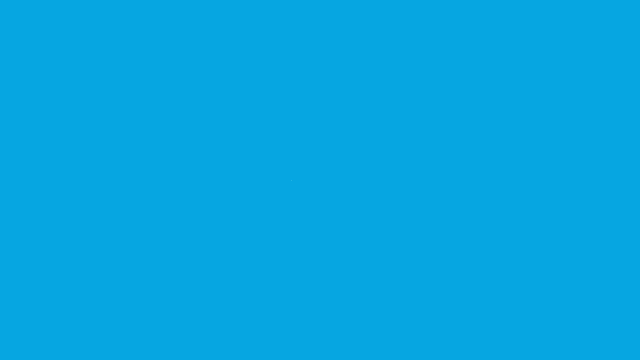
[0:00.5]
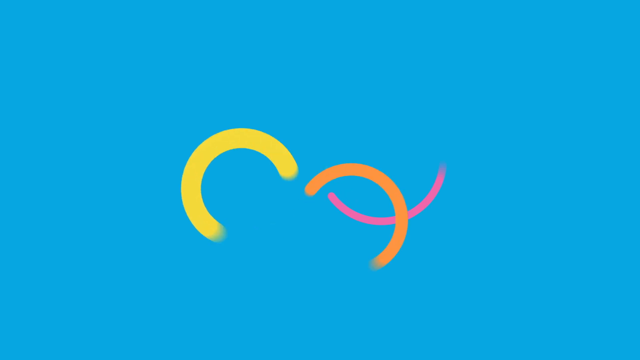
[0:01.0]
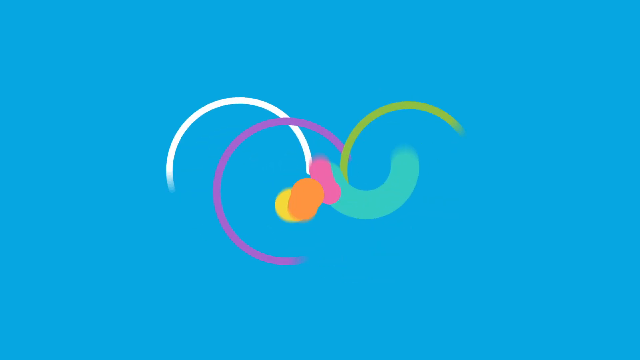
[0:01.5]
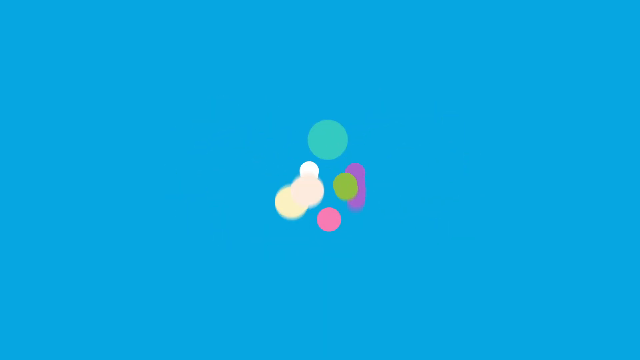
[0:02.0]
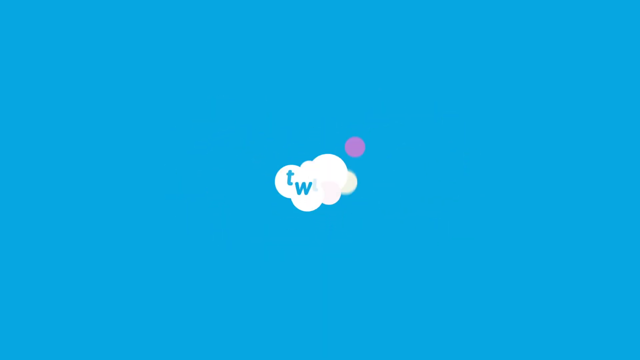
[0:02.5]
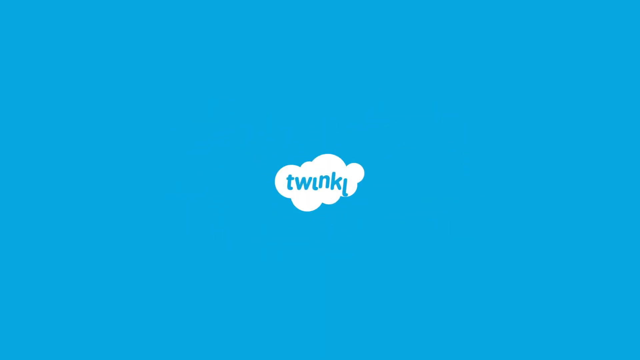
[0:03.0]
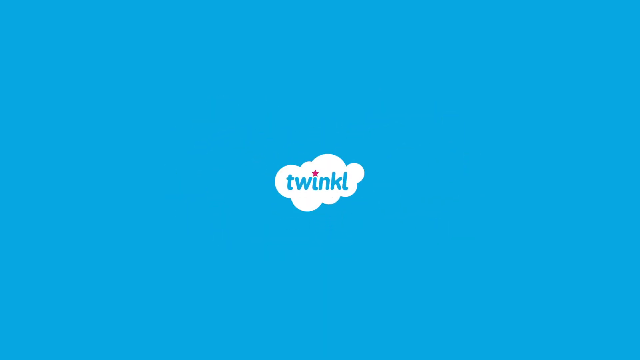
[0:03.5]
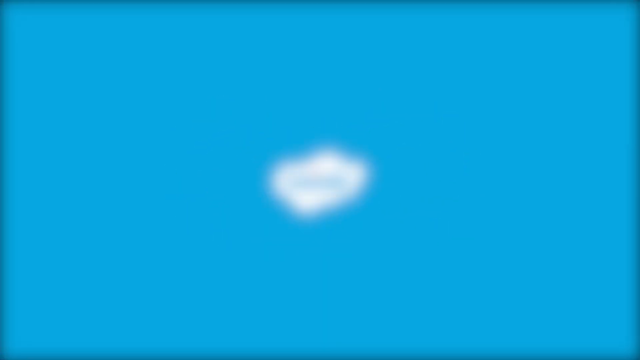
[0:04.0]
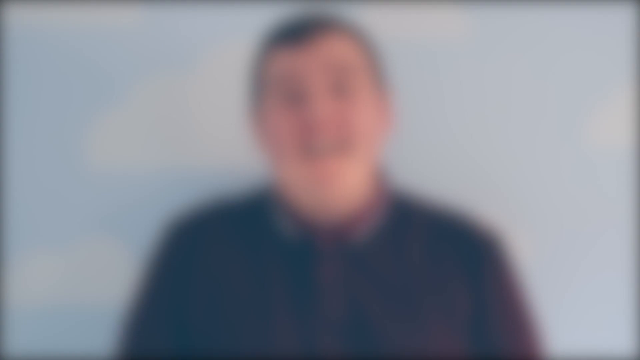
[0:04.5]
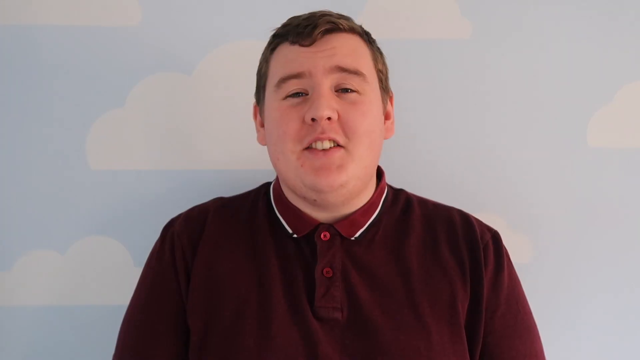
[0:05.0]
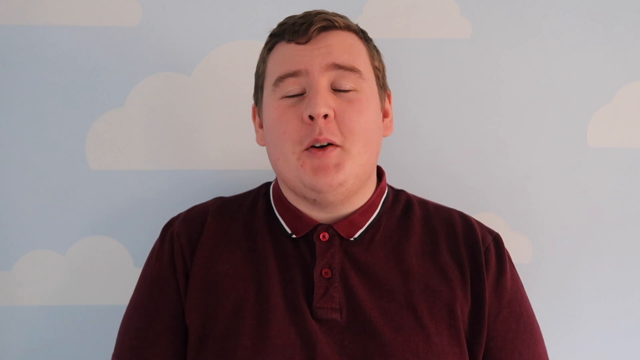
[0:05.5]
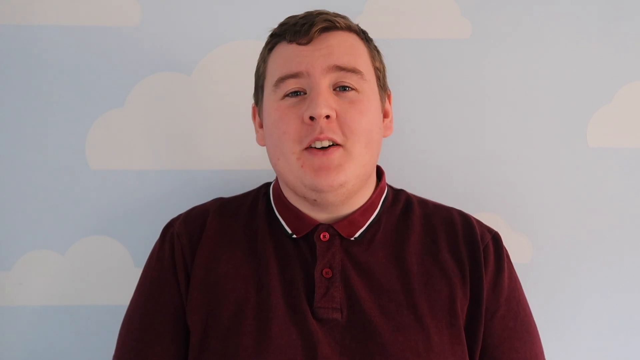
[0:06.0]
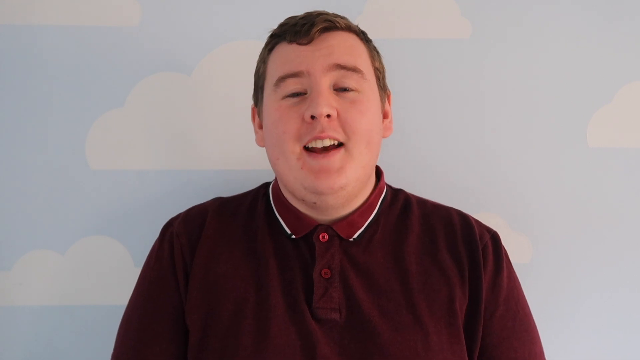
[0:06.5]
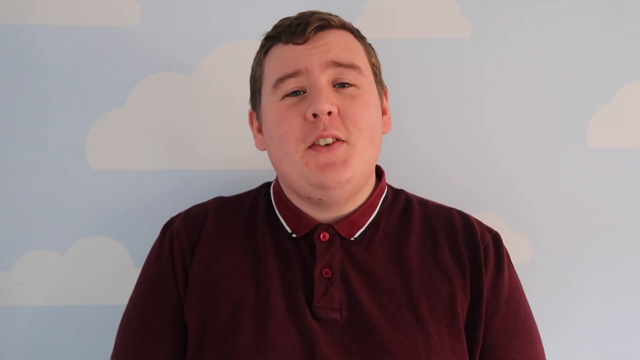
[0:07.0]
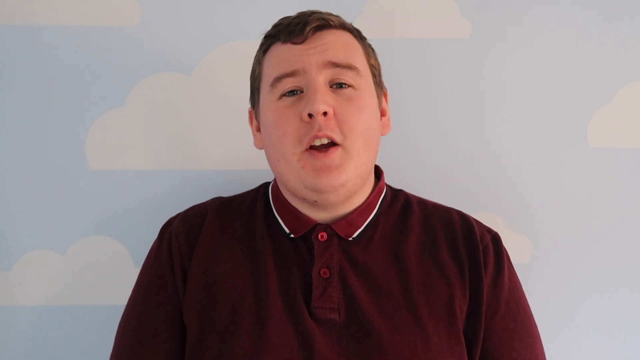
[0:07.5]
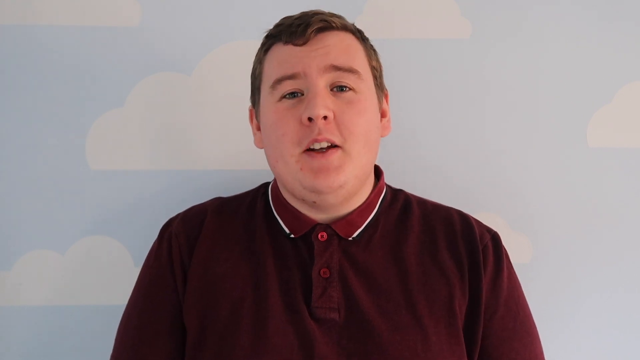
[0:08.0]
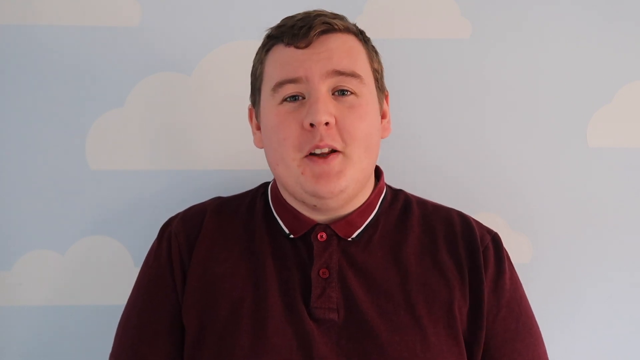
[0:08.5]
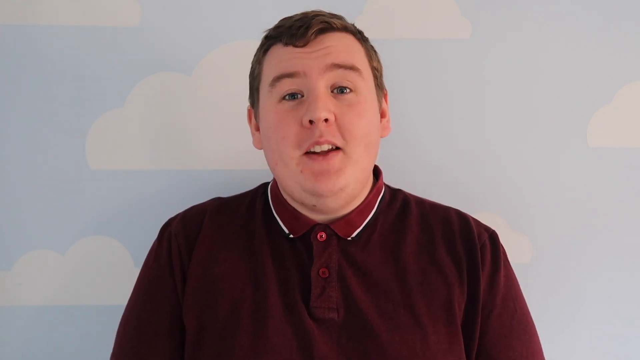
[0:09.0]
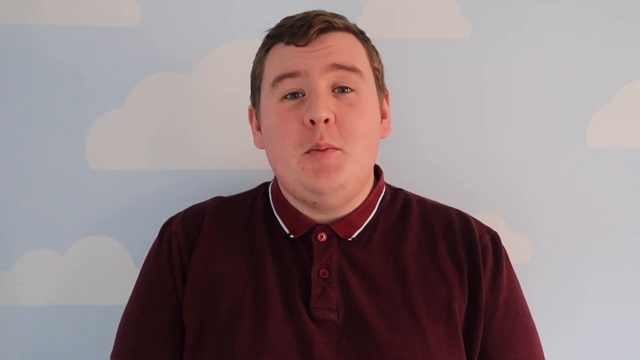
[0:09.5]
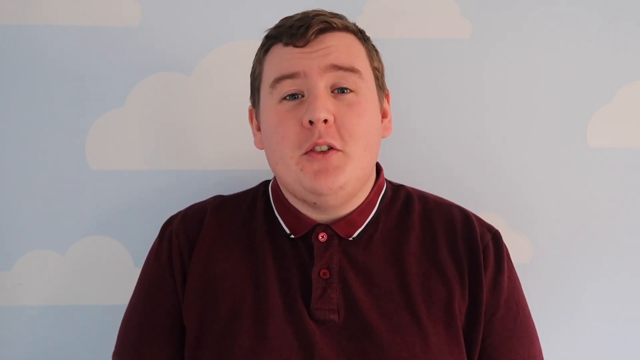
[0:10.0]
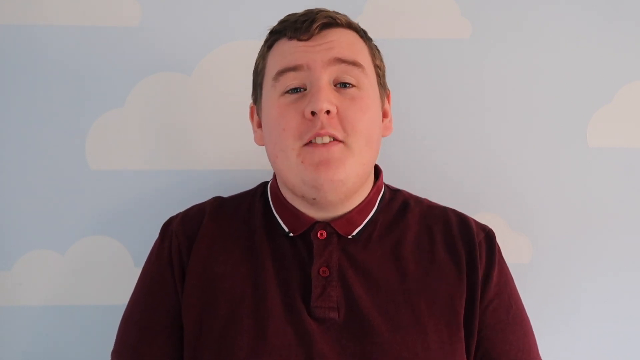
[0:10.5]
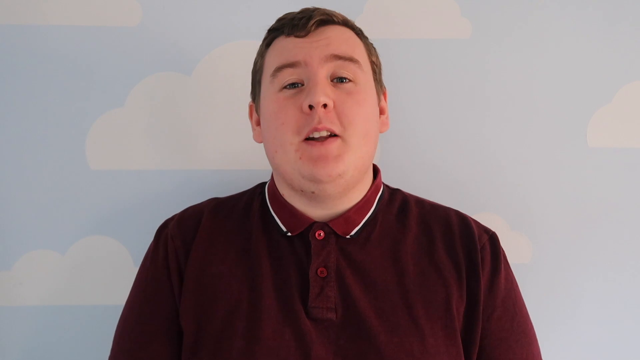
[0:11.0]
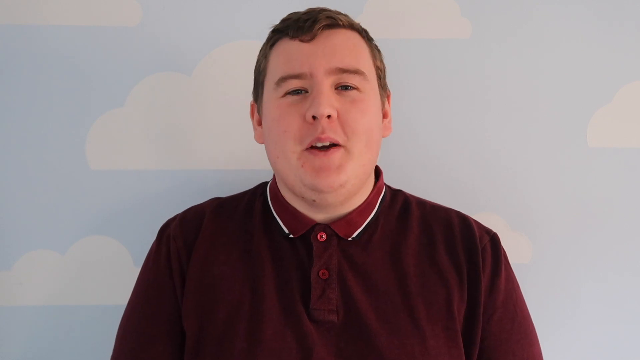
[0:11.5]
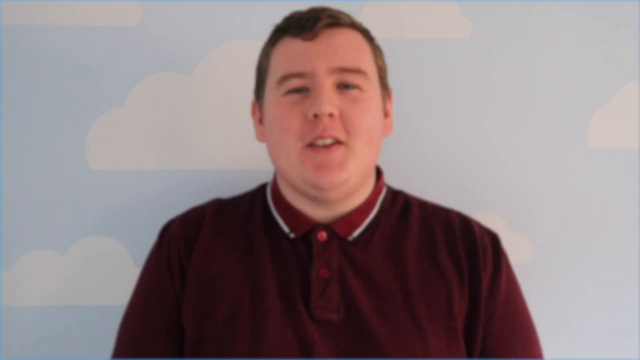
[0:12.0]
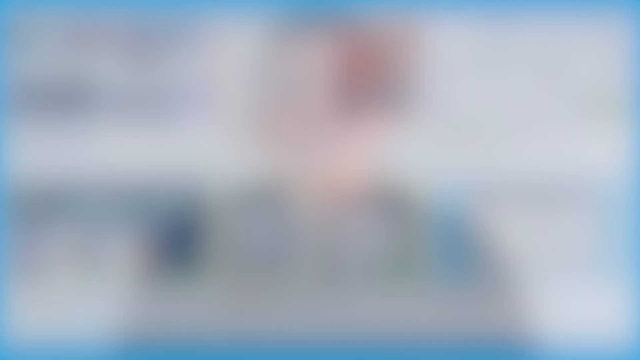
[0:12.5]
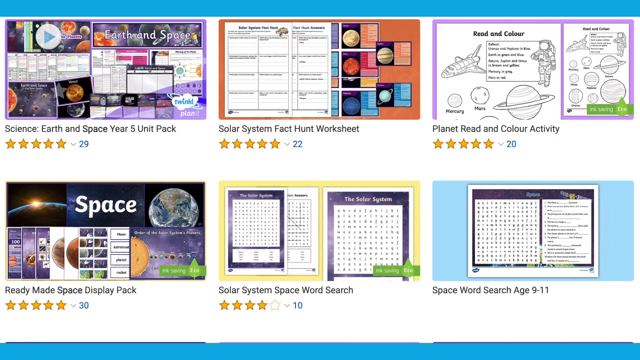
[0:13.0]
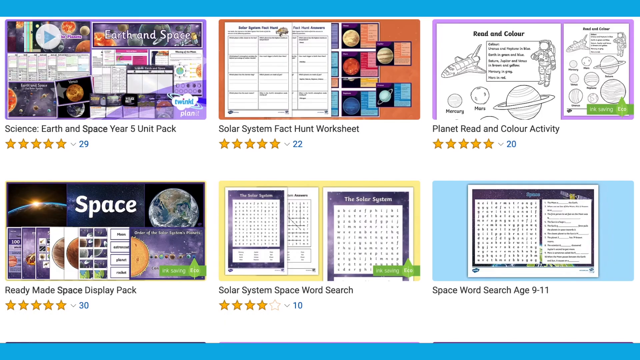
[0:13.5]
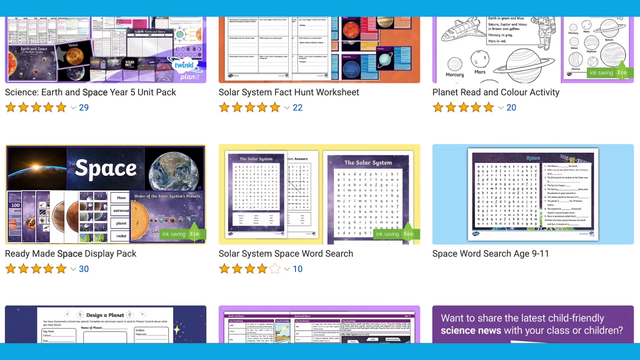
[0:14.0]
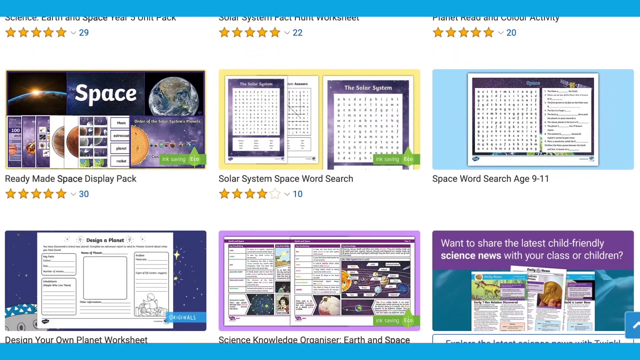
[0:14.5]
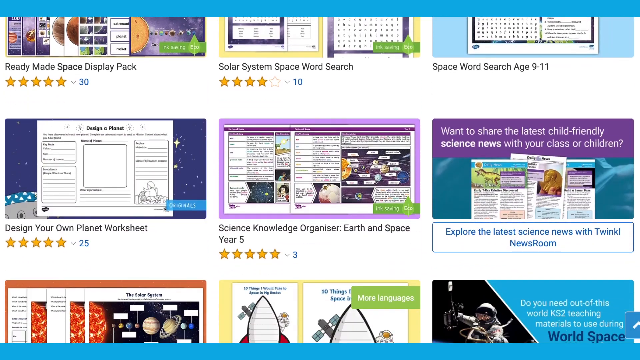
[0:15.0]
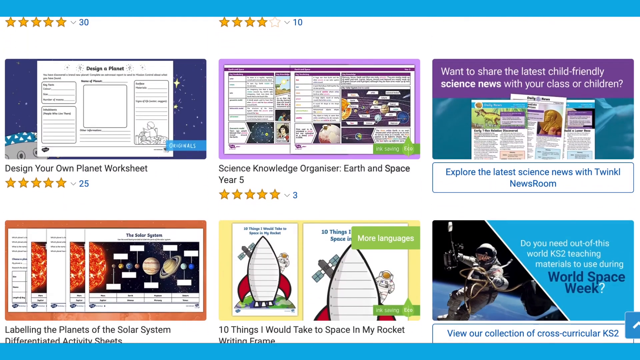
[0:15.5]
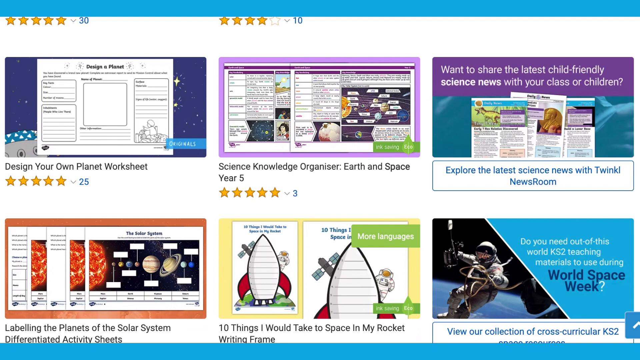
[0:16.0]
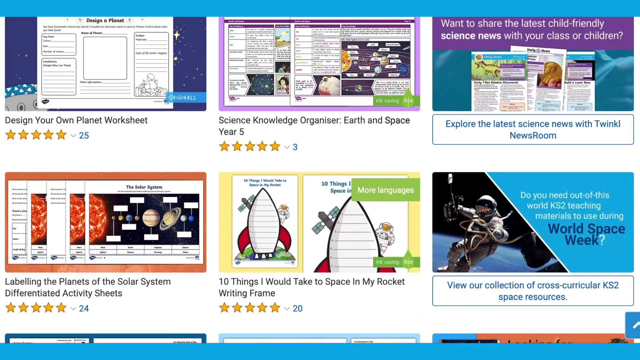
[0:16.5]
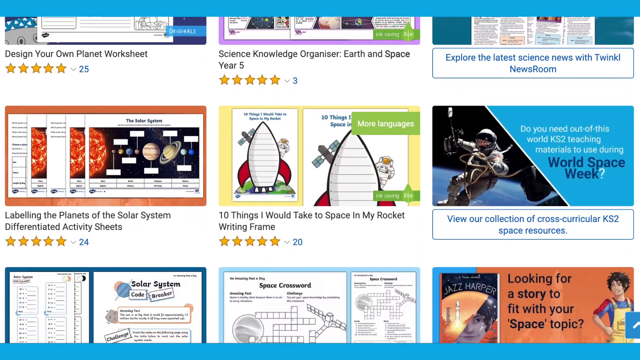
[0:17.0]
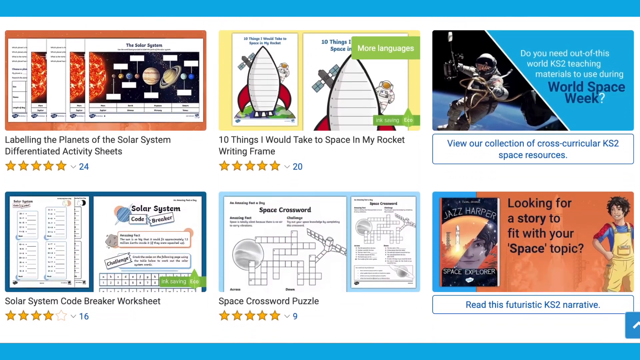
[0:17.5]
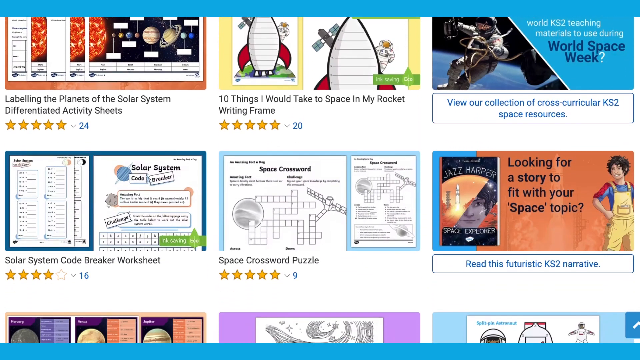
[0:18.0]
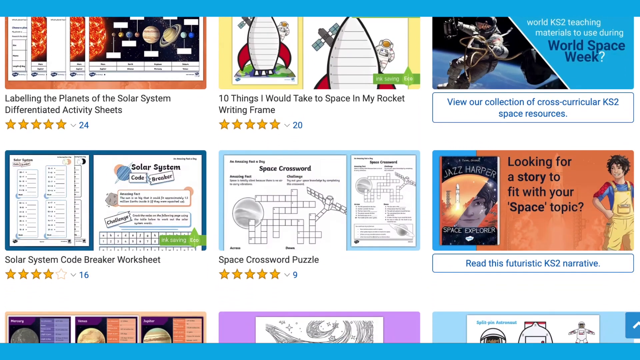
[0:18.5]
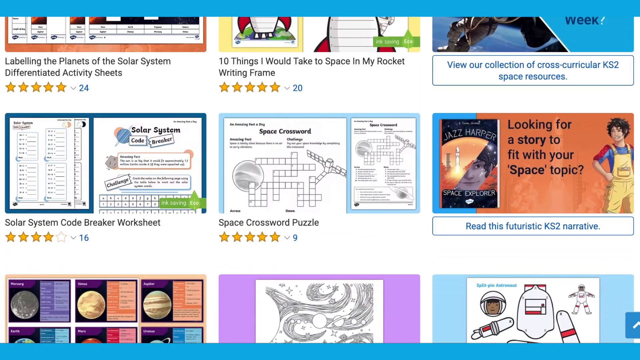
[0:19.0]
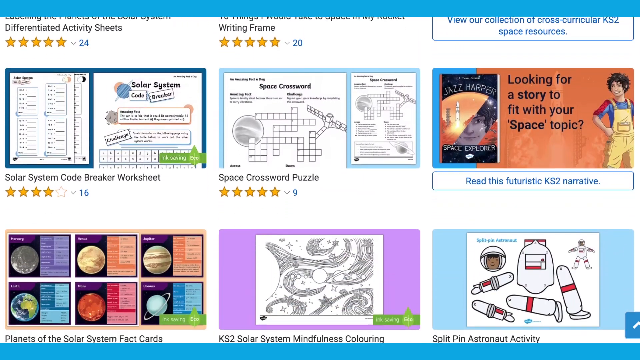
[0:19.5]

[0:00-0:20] Lines of different colors move across the screen, then turn into dots of white, pink, purple, green and blue. Against a blue background, a logo comes together as a white cloud that says "TWINKL". A man in a maroon button-up shirt then stares at the camera, talking. Next, what appears to be a website with a lot of educational material appears, with clickable titles including "design your own planet workshop, ready-made space digital pack or display pack, solar system space, word search". The titles appear to be game-type items that can be downloaded or played directly on the website.